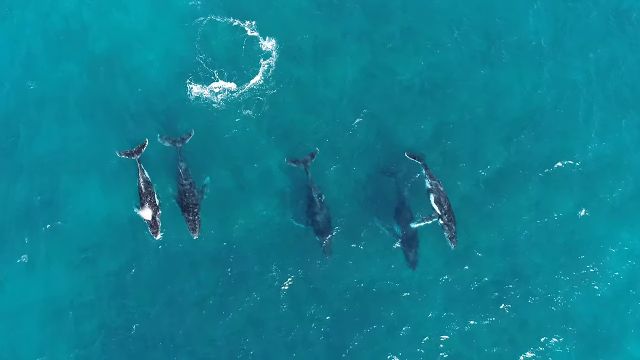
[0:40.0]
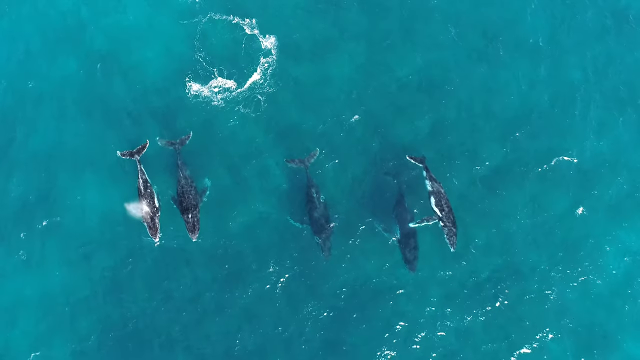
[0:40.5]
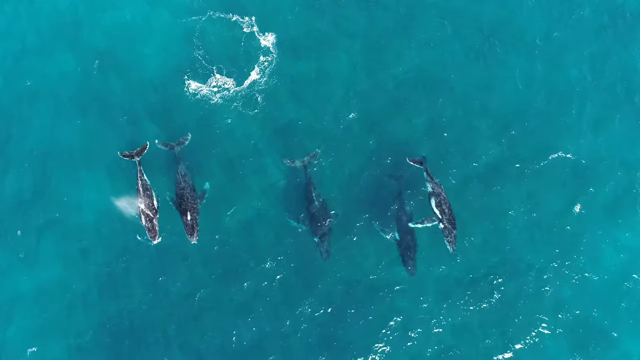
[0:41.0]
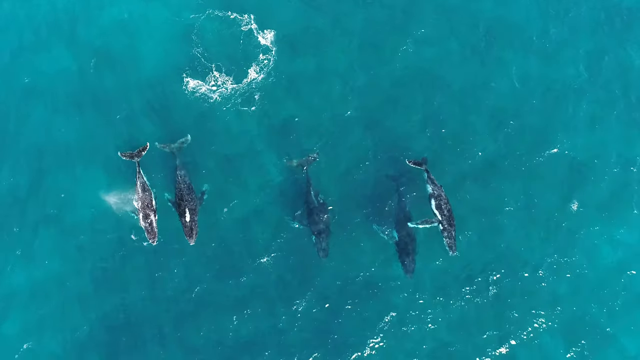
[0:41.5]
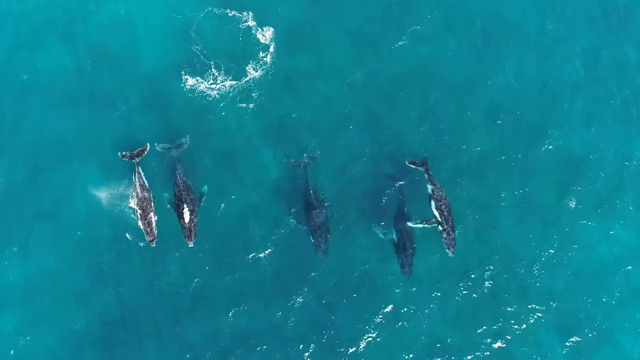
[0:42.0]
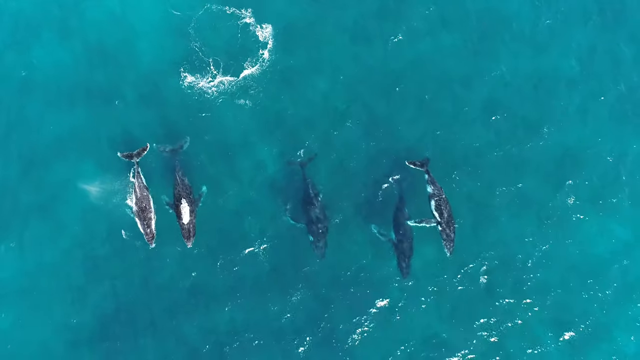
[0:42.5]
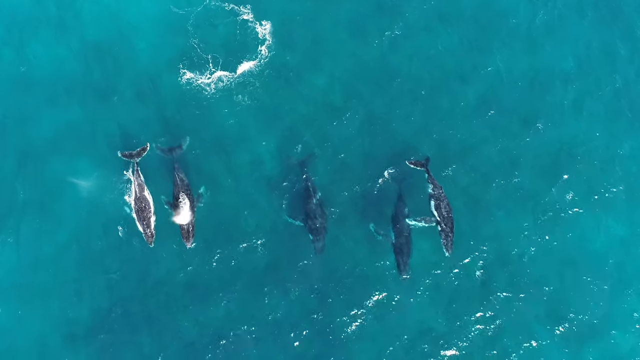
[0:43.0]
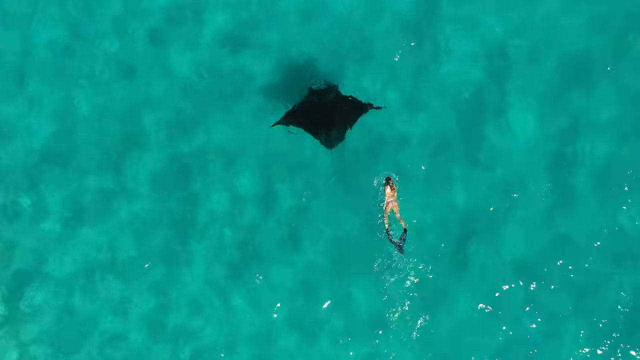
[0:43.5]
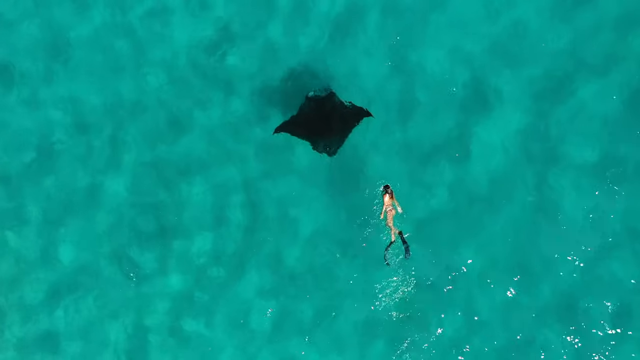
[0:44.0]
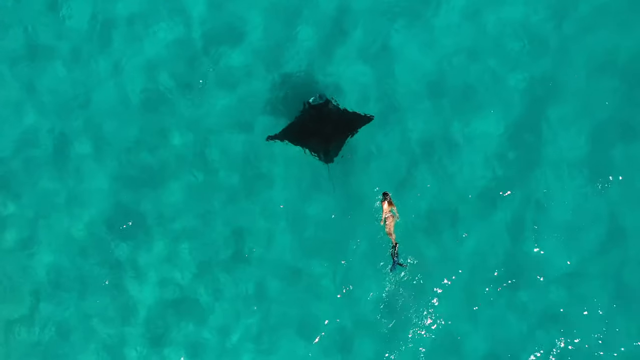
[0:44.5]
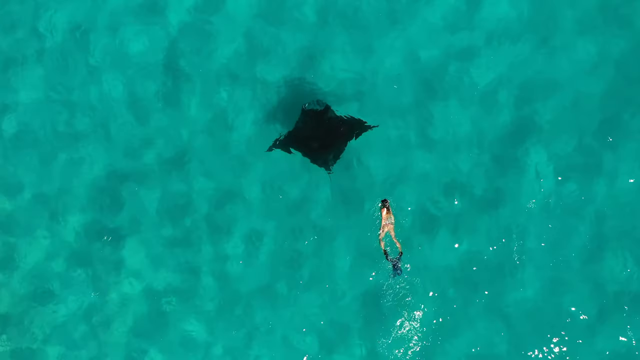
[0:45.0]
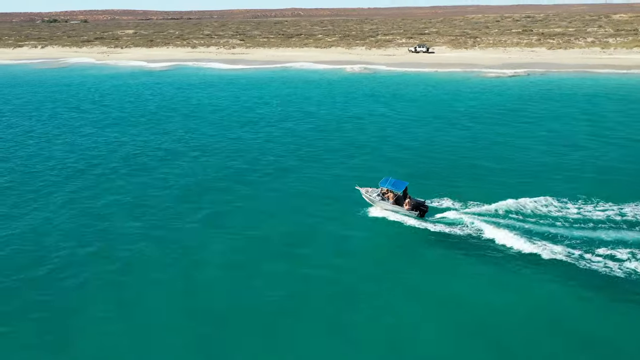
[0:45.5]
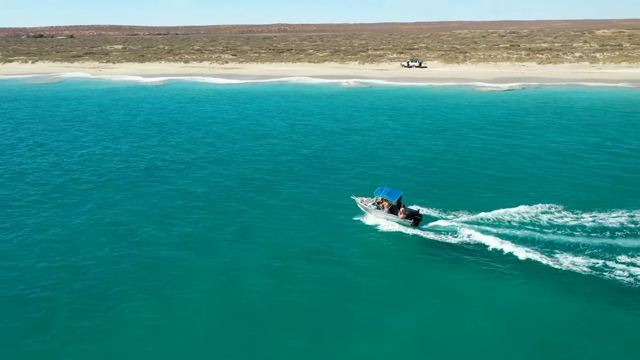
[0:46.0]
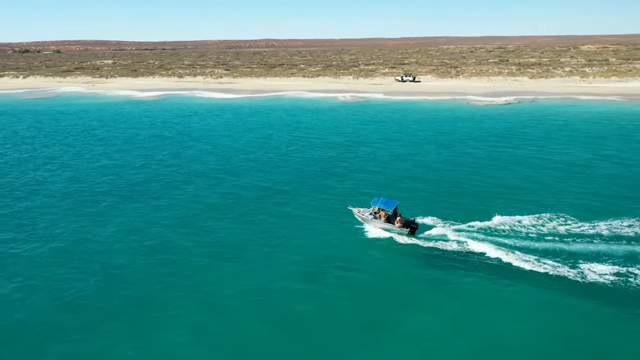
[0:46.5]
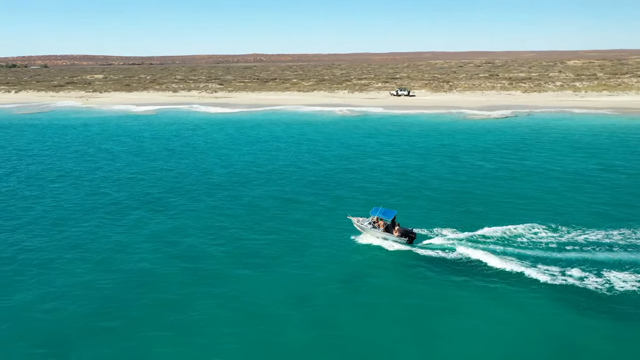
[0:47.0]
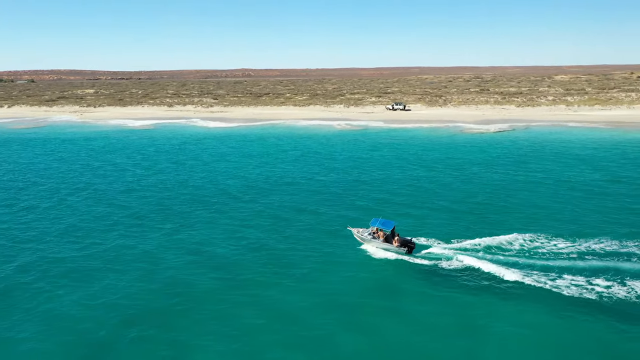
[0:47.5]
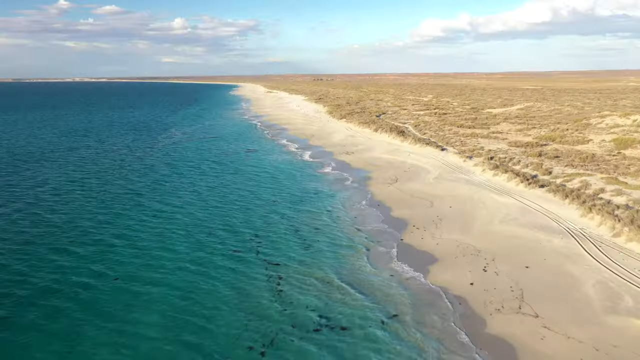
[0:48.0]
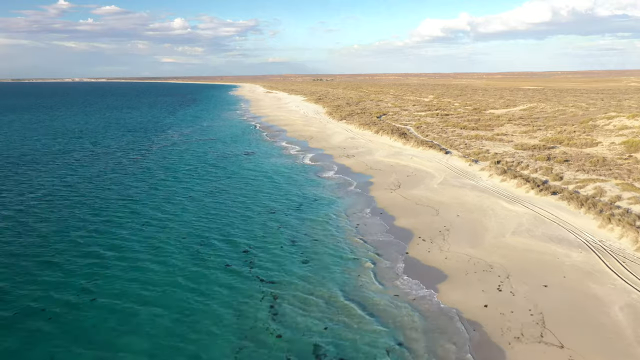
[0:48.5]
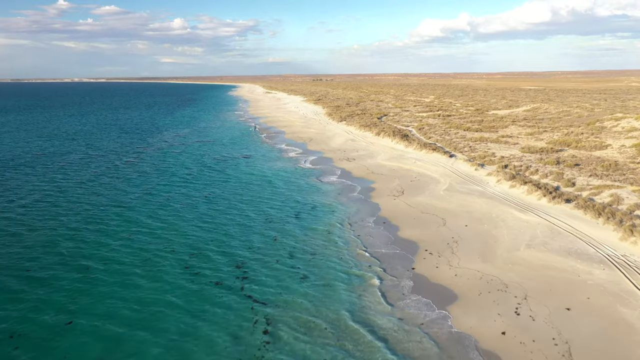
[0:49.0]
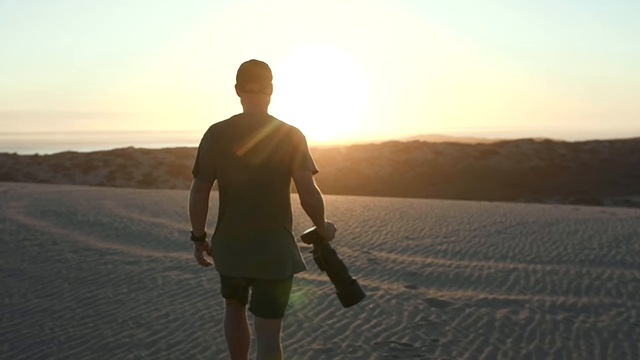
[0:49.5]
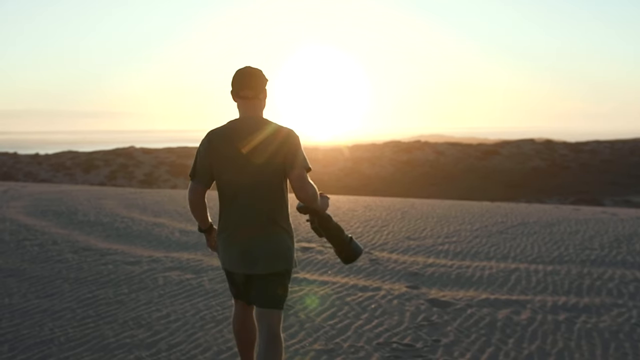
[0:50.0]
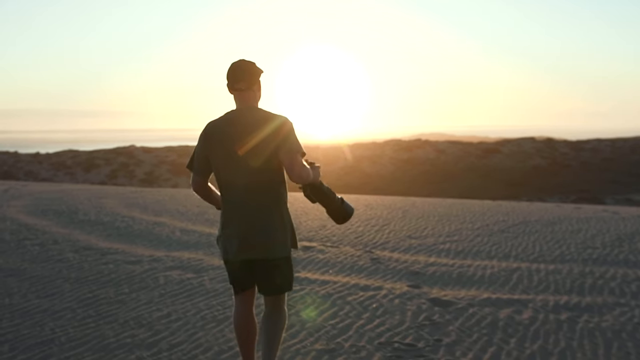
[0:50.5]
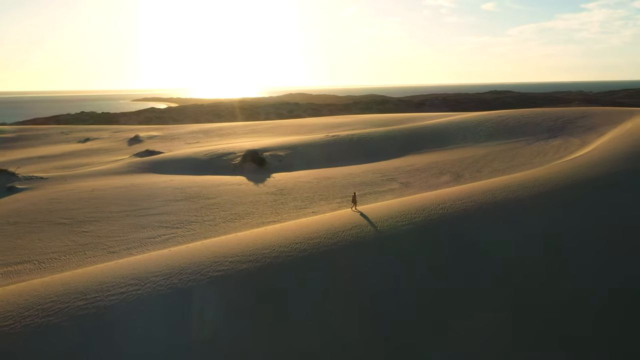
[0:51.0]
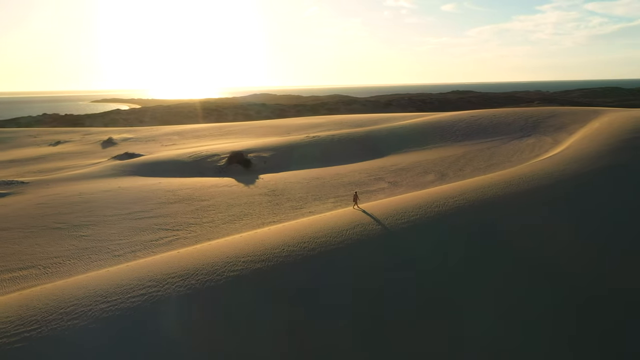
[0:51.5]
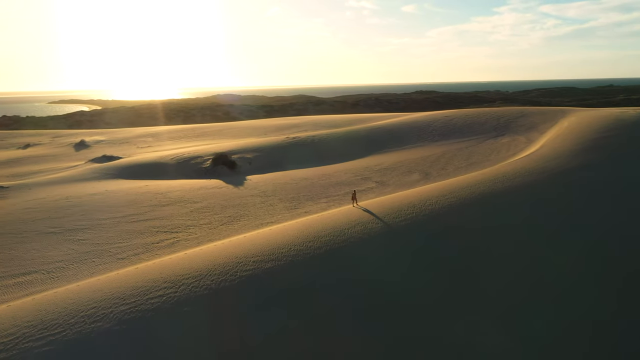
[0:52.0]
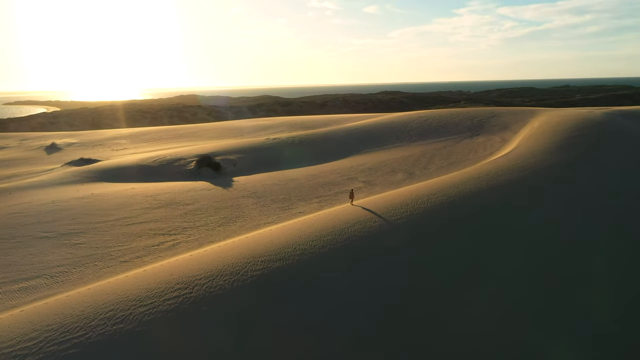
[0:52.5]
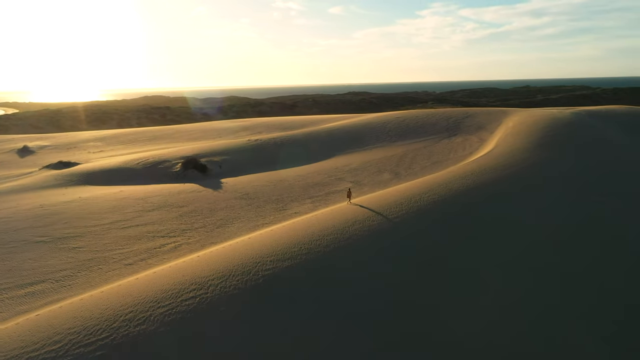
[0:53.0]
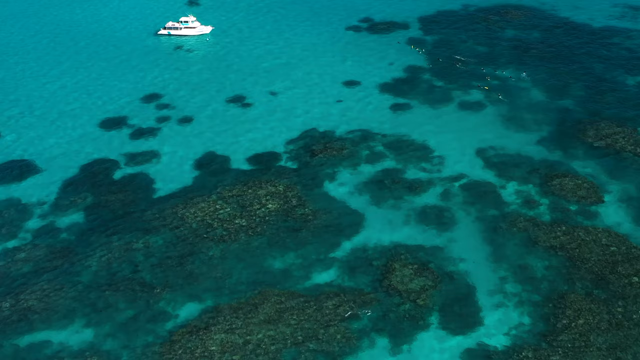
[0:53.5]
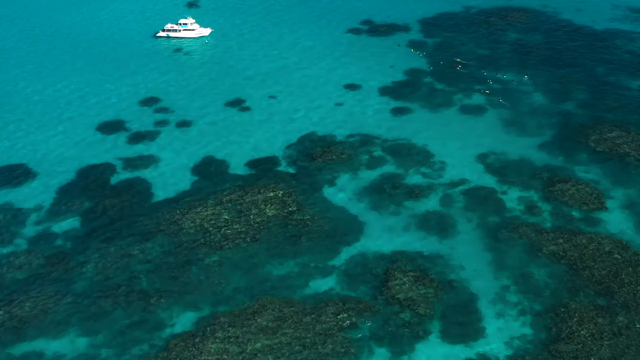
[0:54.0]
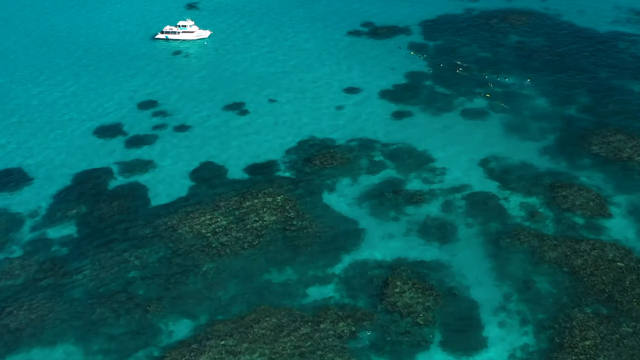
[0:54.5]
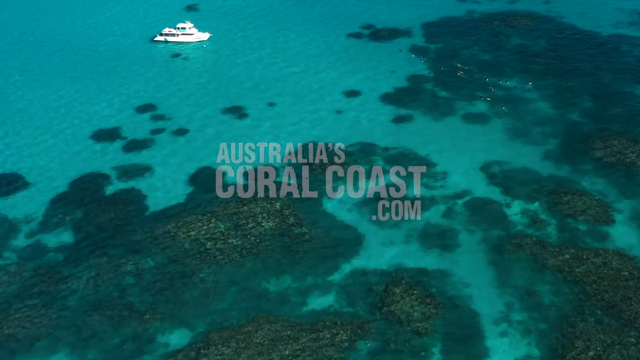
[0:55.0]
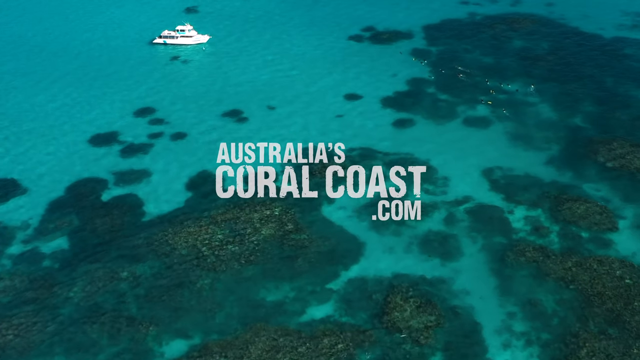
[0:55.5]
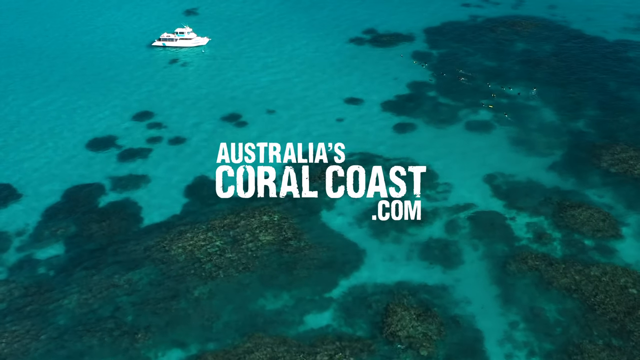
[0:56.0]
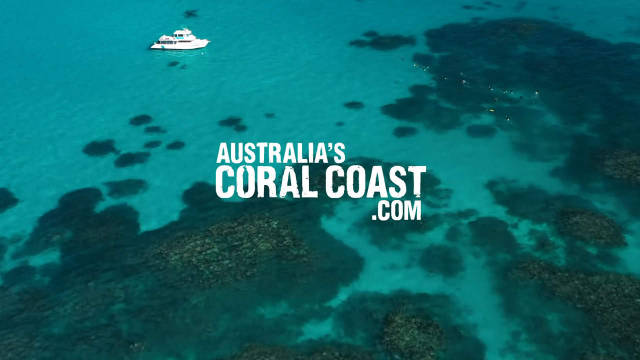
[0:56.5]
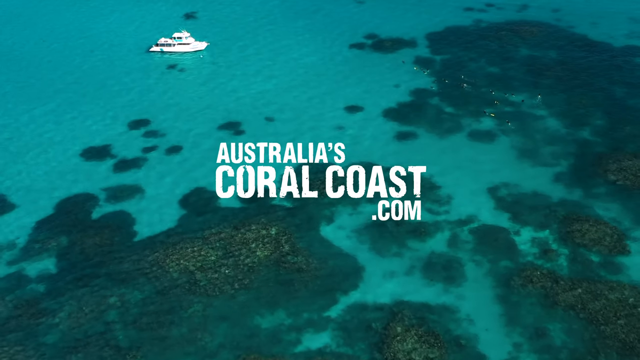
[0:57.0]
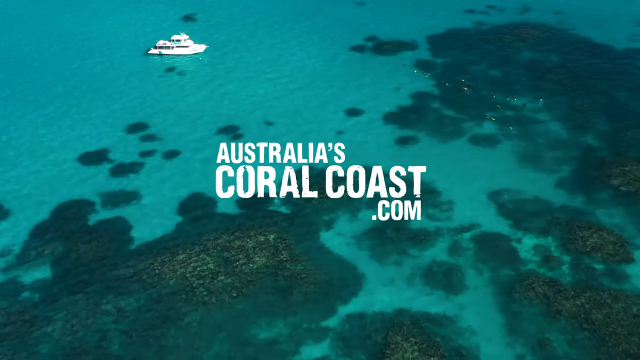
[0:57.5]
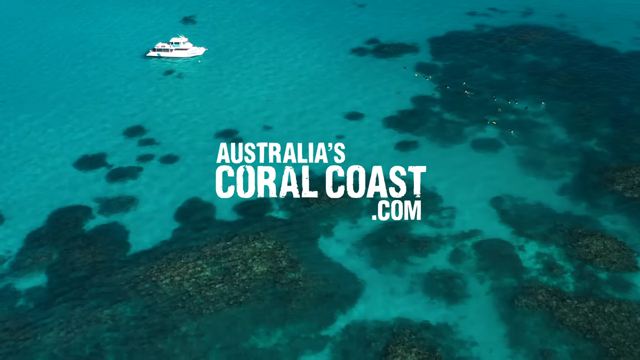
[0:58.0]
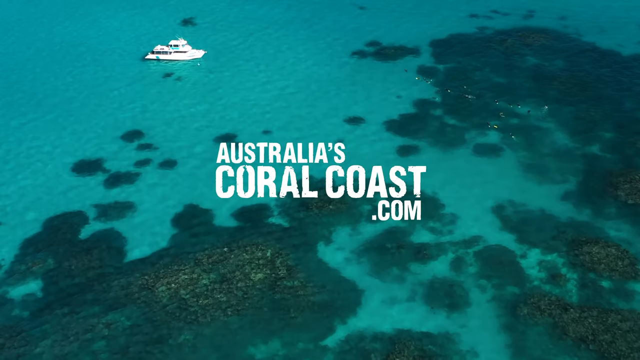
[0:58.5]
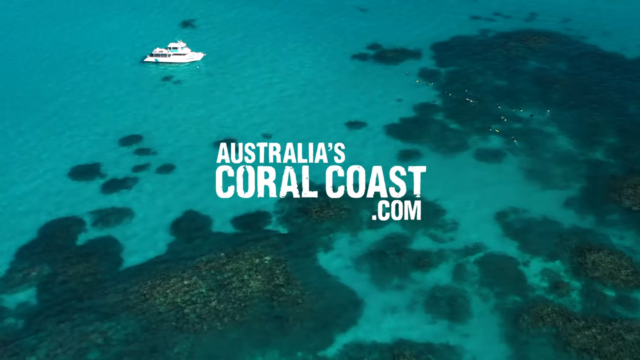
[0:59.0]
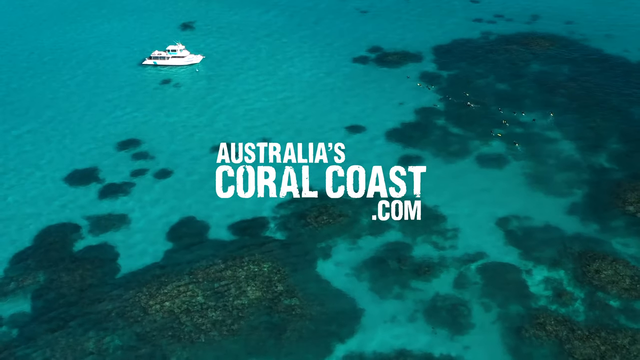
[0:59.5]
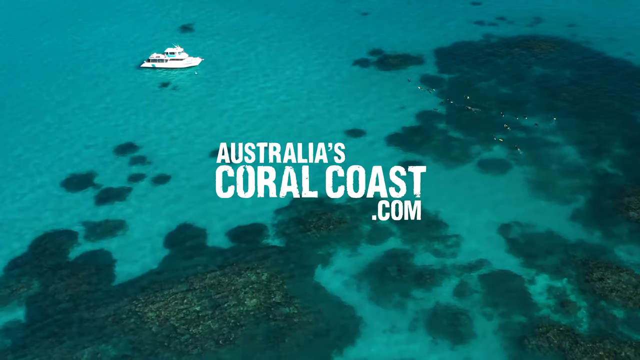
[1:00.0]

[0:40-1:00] Five whales go through the ocean; one of them is squirting water from an air hole, and there is a swirl of water behind them. One on the right seems to be flipping slightly to the side. The footage transitions to what looks like a ray fish going through the water, filmed directly from above, probably by a drone, with a swimmer, most likely a woman since they have long hair, wearing flippers and going through the water a few metres behind the ray. A small speedboat with a blue canopy goes through the water quite close to the beach. A very long stretch of sandy beach and clear water follows. A man walks with the sun setting, on terrain that looks almost like a Sahara but is a beach. Finally, a yacht, probably still in the water, is in the distance over an area of coral reef, with "australiascoralcoast.com" superimposed as the view slowly zooms into the coral reef.